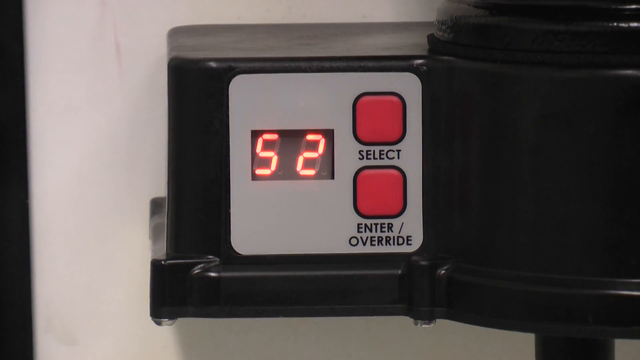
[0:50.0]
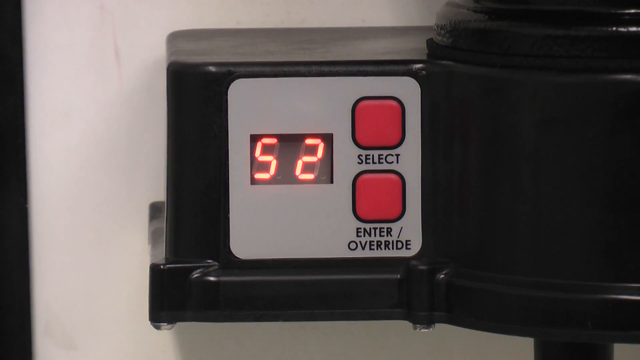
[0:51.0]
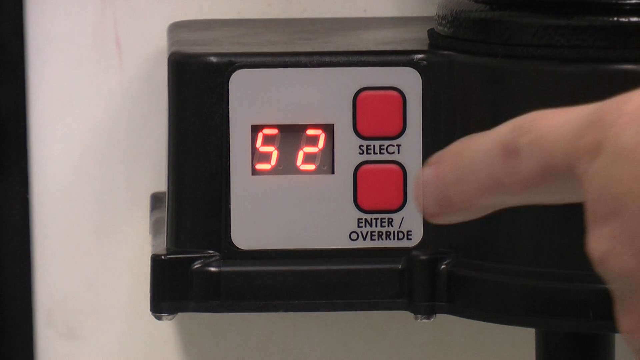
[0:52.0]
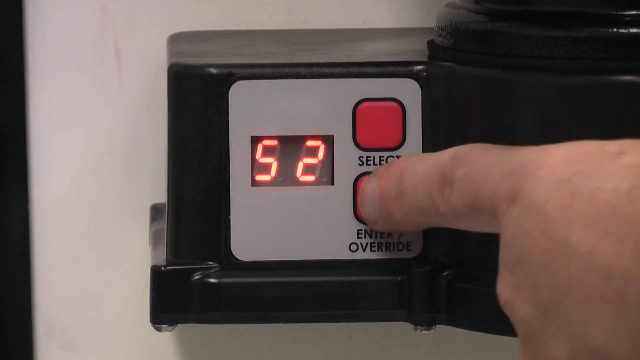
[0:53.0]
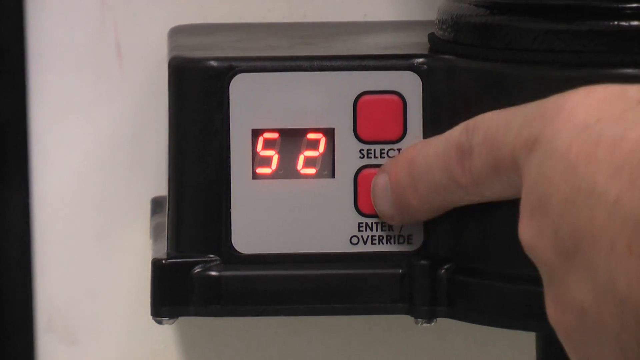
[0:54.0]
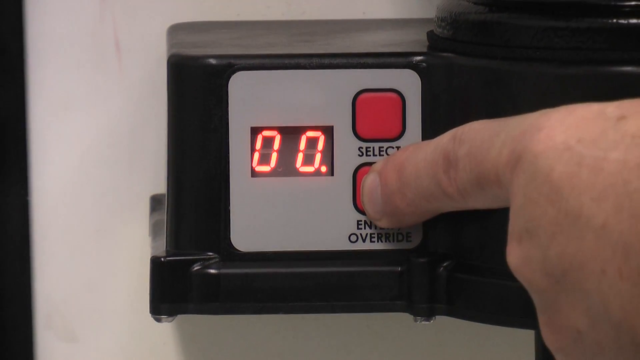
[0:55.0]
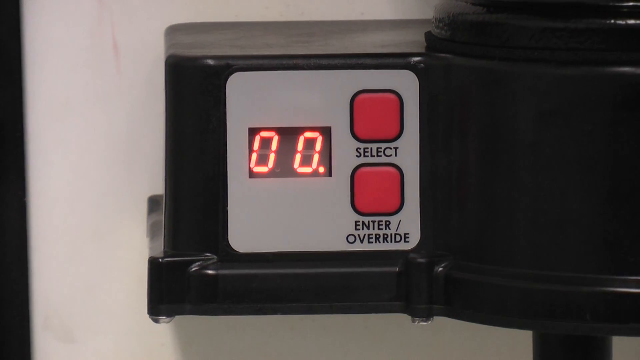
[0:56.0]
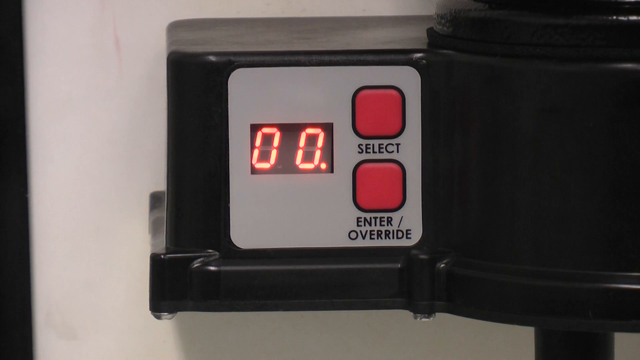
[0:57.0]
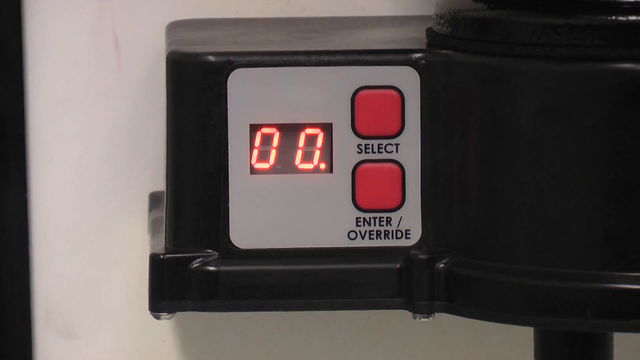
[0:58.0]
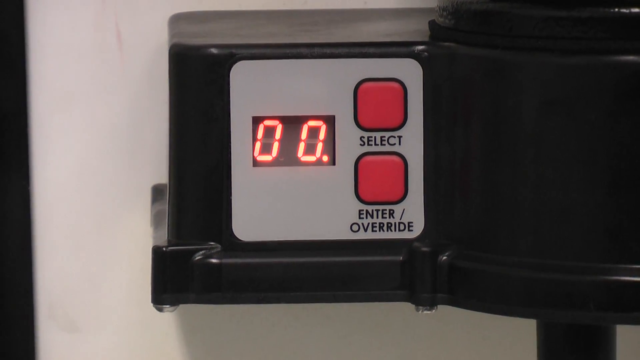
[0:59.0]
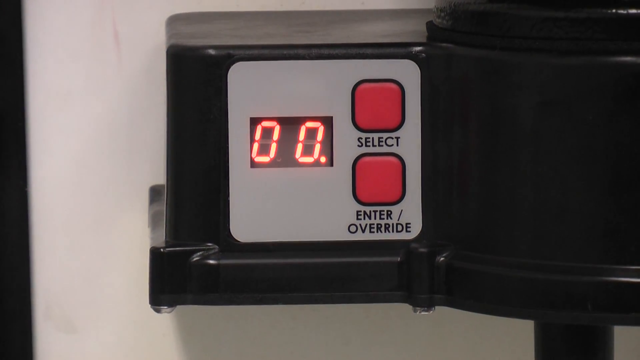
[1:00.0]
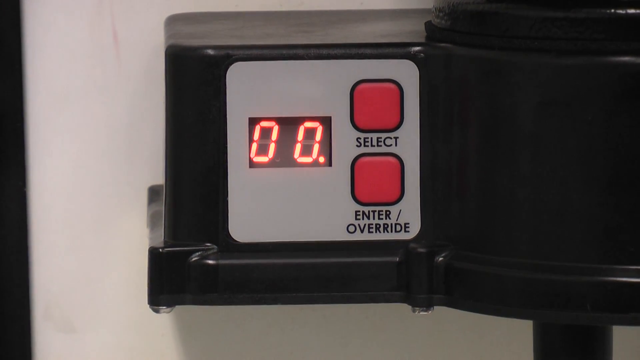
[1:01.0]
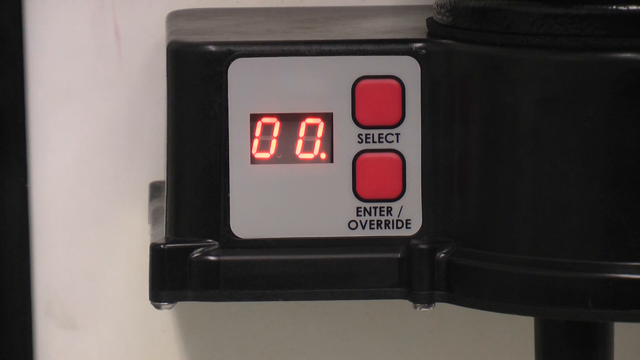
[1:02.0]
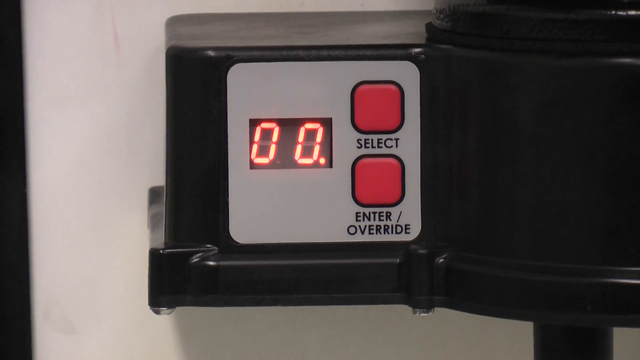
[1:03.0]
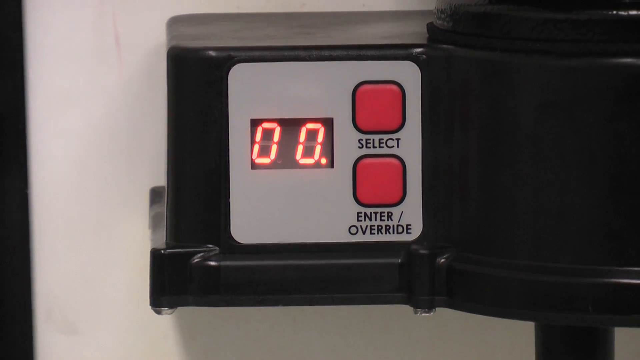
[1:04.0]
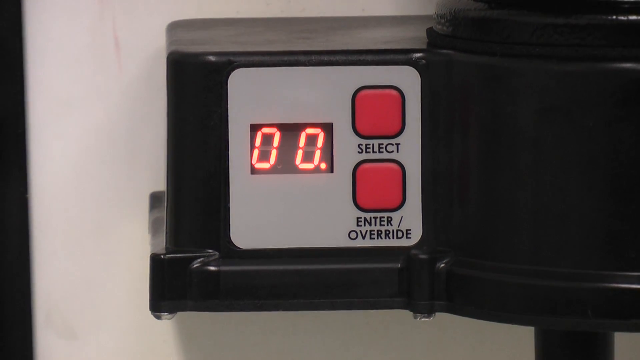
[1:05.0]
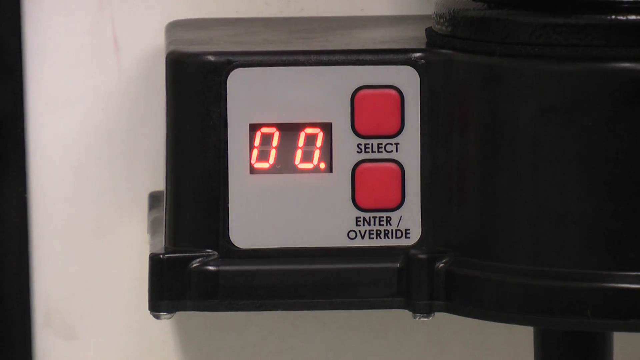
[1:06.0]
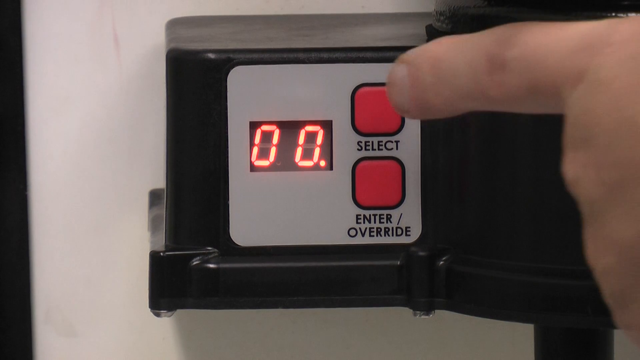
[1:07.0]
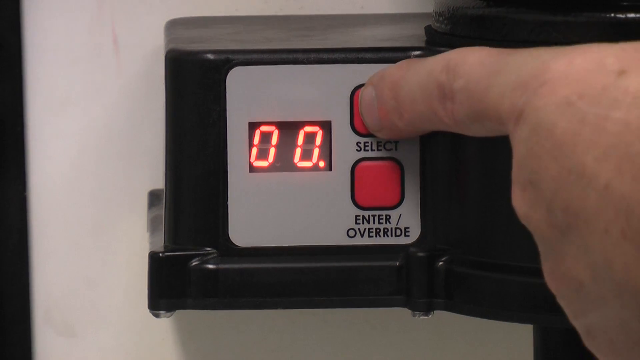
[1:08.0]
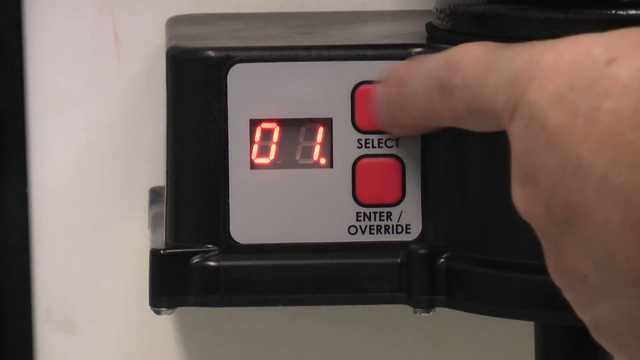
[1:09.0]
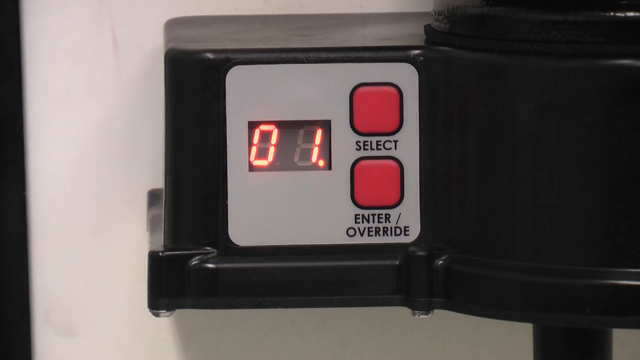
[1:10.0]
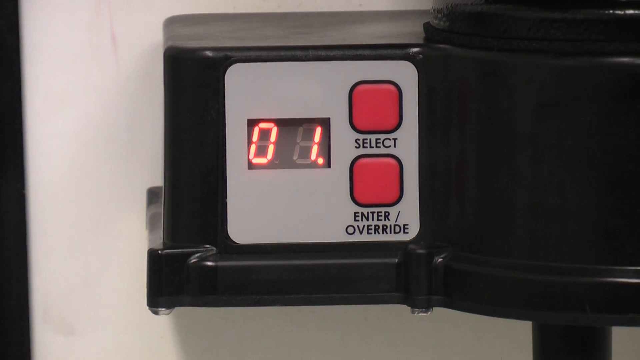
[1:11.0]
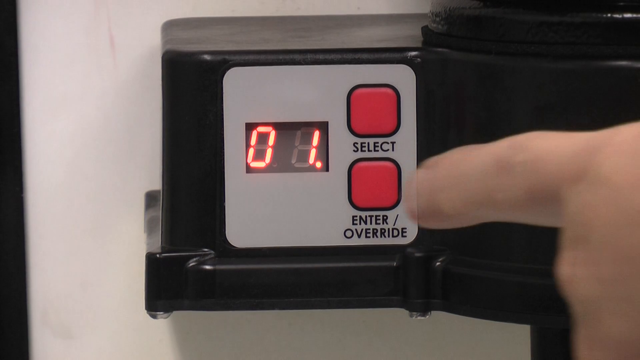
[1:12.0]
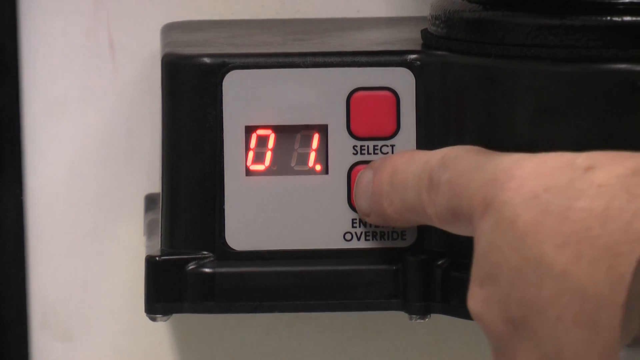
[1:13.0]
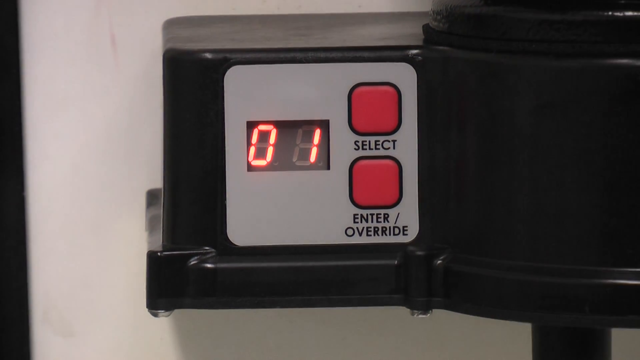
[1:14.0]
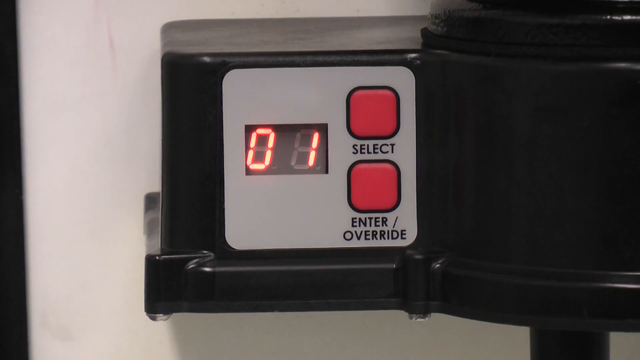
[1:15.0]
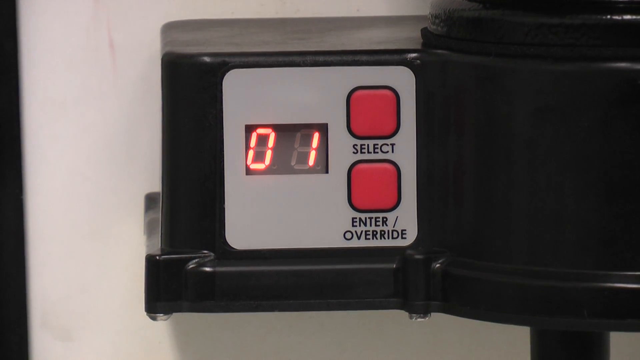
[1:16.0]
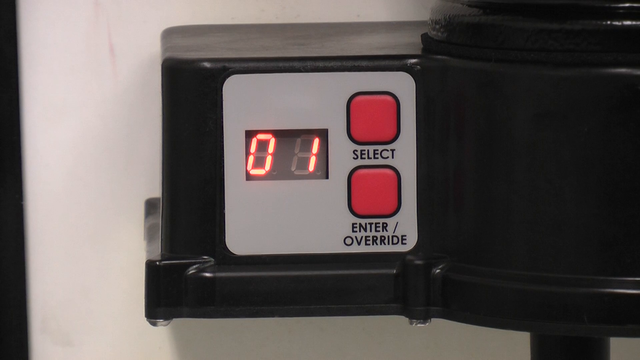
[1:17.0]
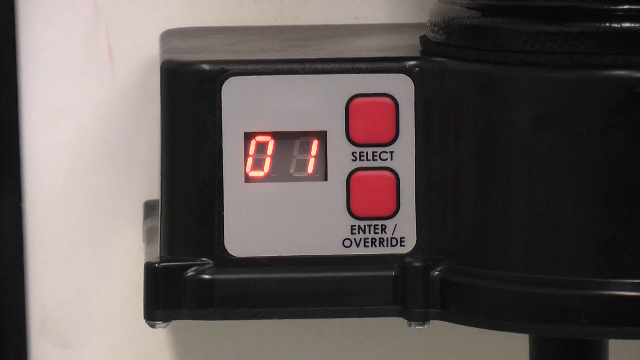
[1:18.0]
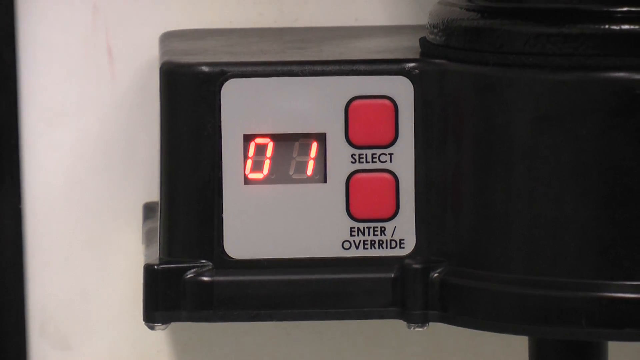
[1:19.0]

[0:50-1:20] A black machine has a button labeled "select" and, below it, a button labeled "enter/override." The display is set on 52, glowing in red. A hand comes into view and presses the enter/override button, and the display changes to "00.". He then presses the select button, which changes it to 1, and leaves it at 1. He presses enter/override again and nothing happens except that the dot is removed, so the display reads "01" instead of "01.".